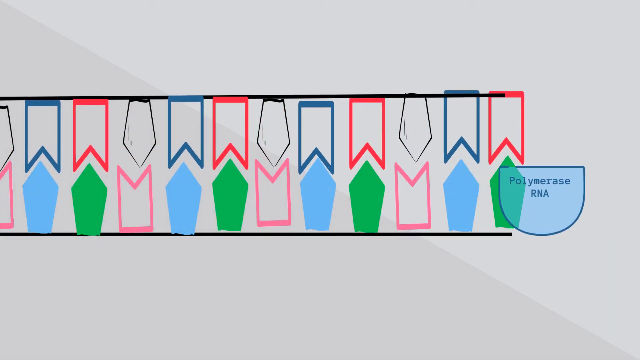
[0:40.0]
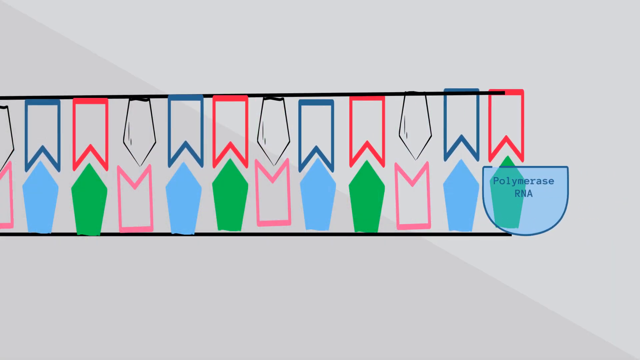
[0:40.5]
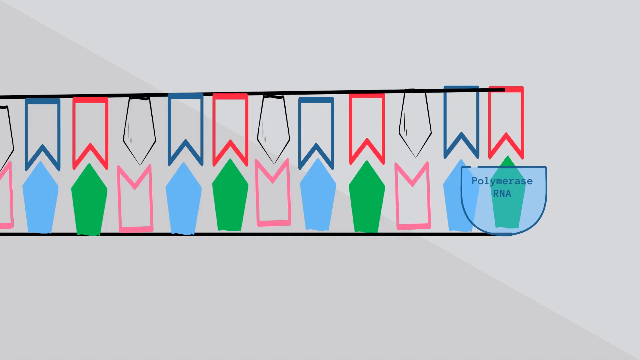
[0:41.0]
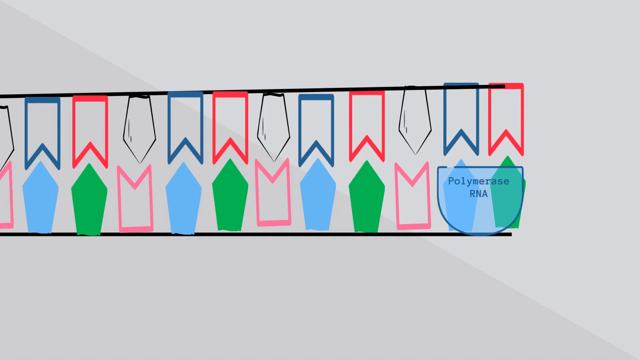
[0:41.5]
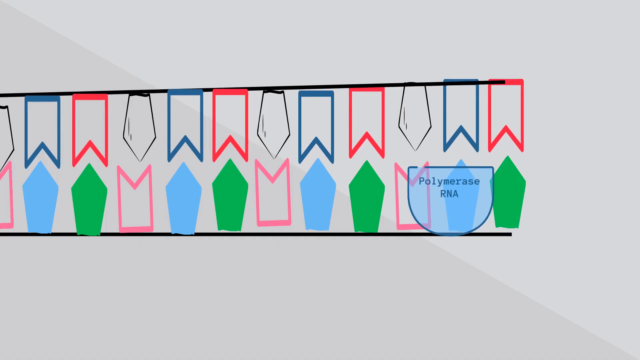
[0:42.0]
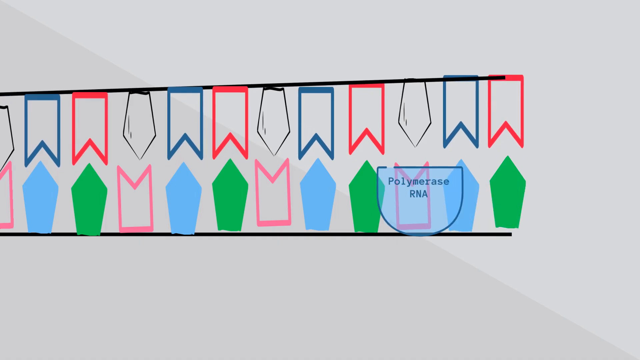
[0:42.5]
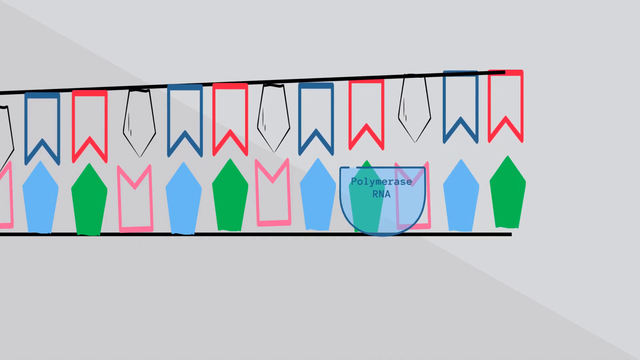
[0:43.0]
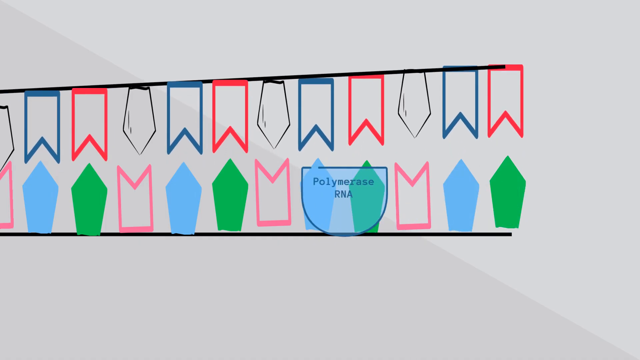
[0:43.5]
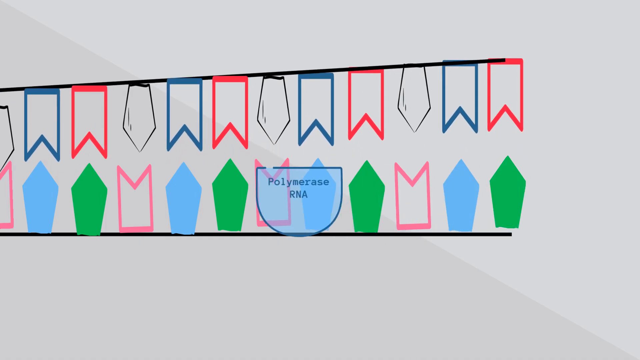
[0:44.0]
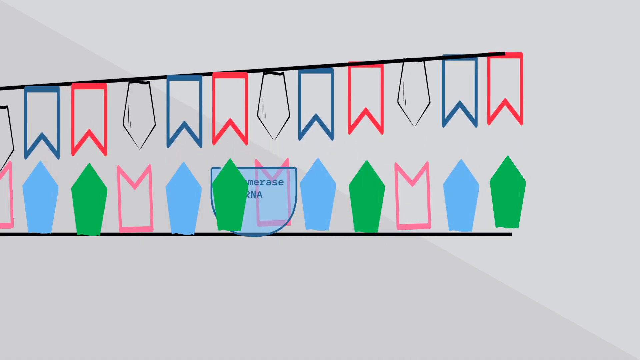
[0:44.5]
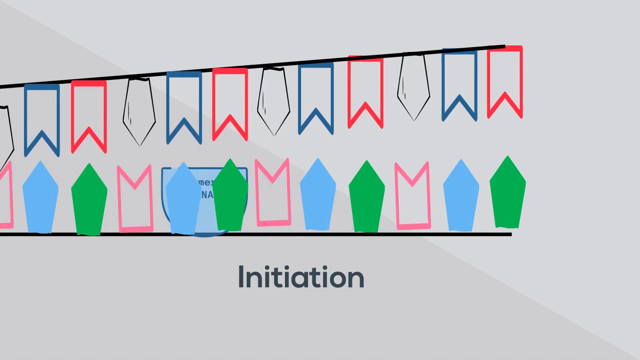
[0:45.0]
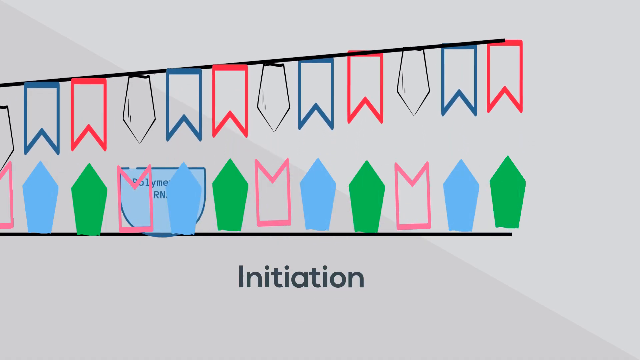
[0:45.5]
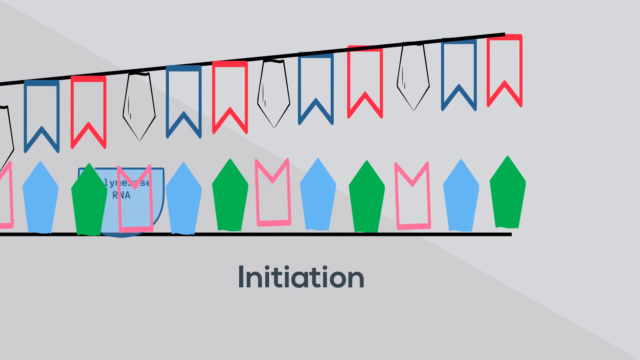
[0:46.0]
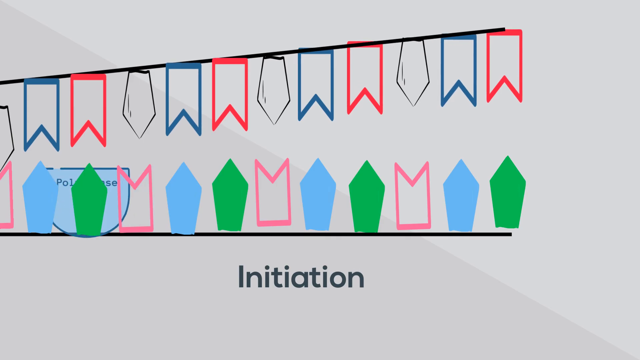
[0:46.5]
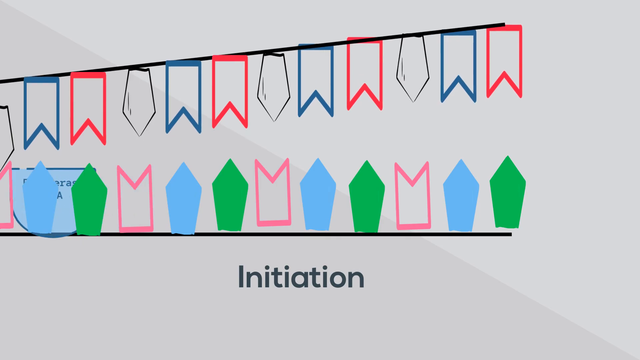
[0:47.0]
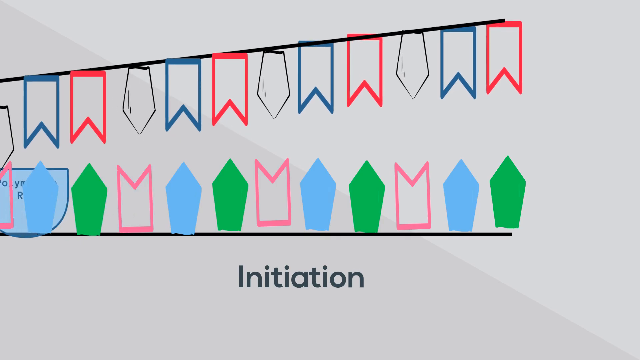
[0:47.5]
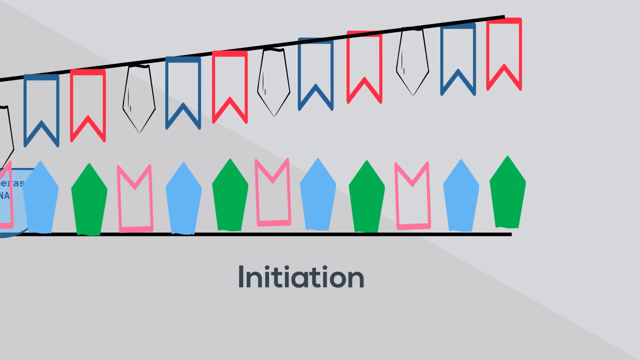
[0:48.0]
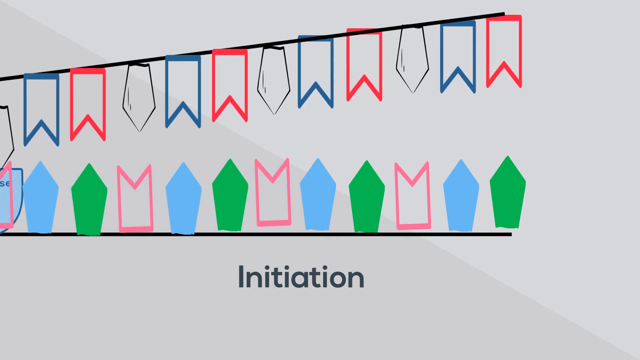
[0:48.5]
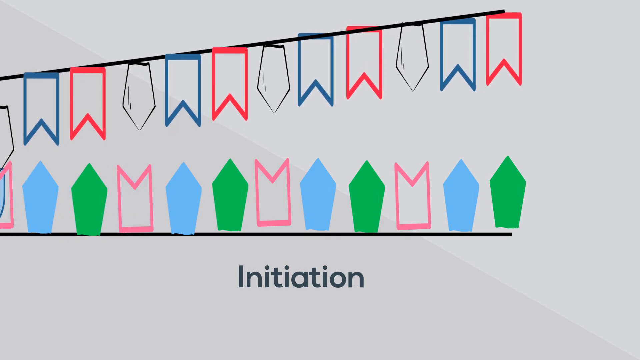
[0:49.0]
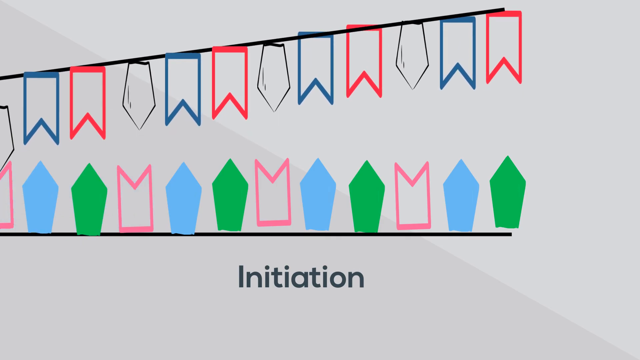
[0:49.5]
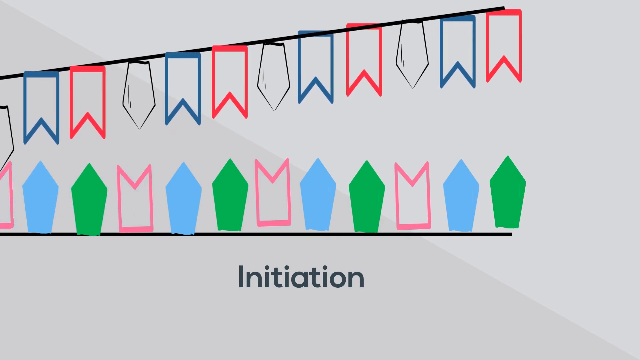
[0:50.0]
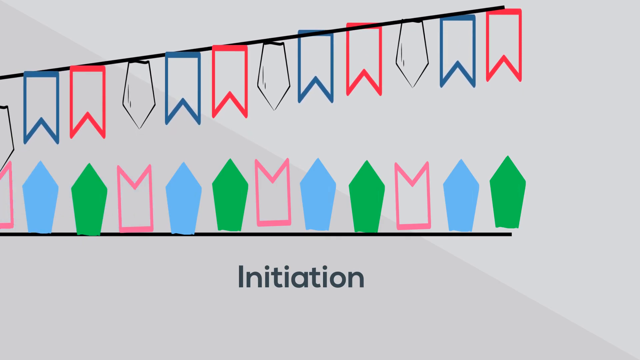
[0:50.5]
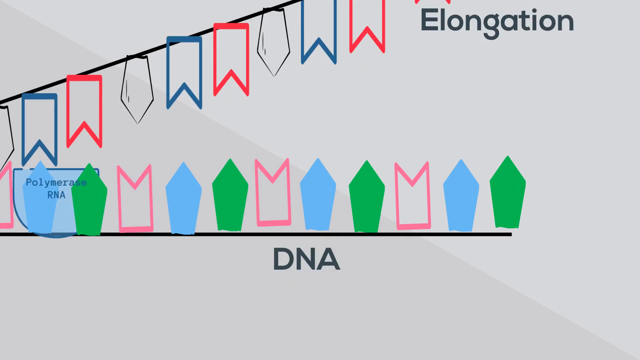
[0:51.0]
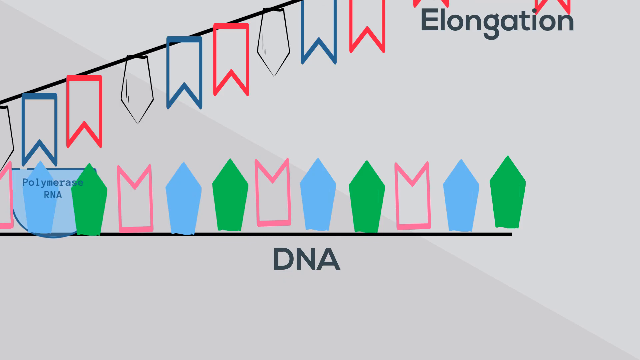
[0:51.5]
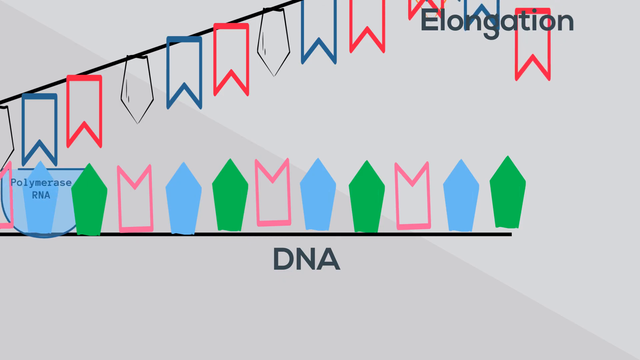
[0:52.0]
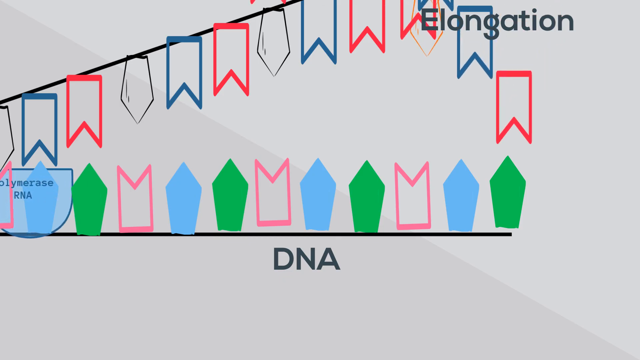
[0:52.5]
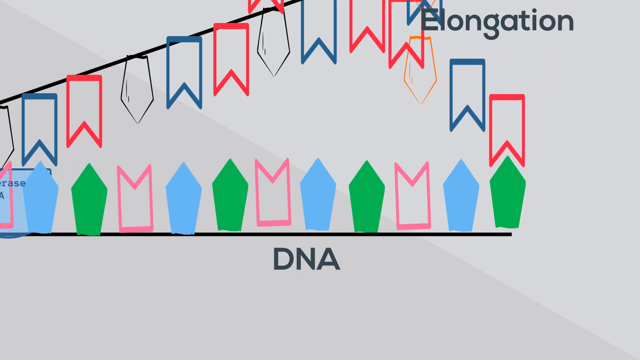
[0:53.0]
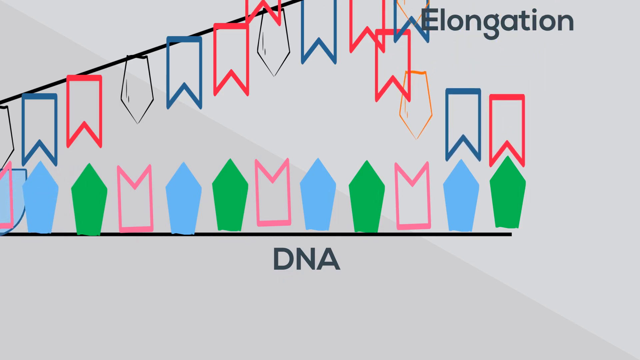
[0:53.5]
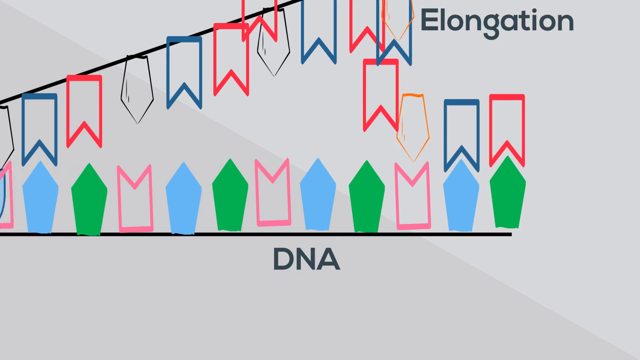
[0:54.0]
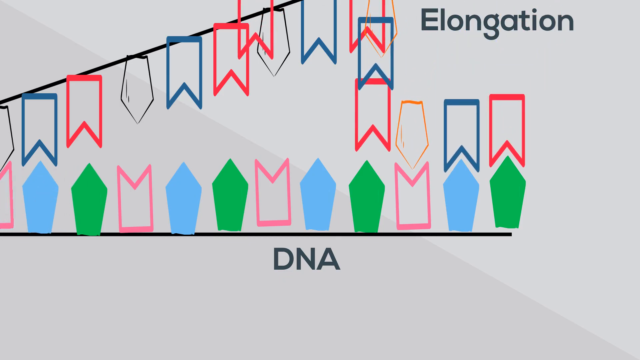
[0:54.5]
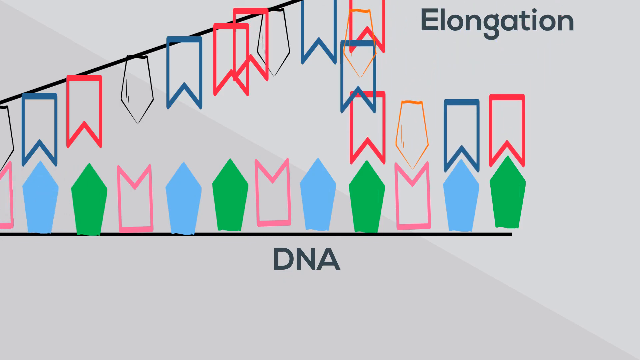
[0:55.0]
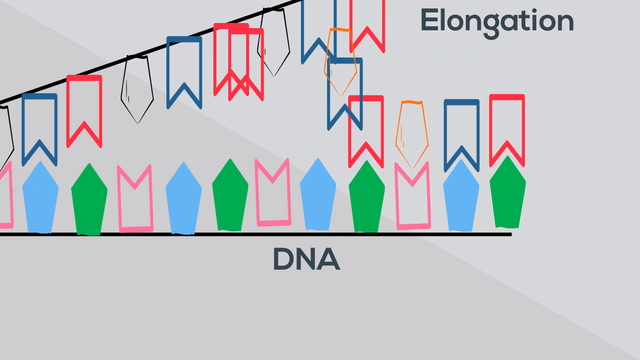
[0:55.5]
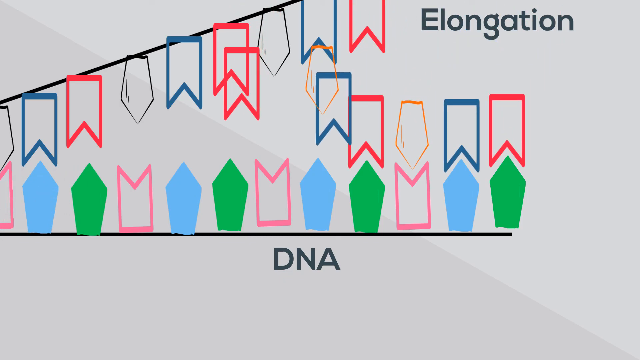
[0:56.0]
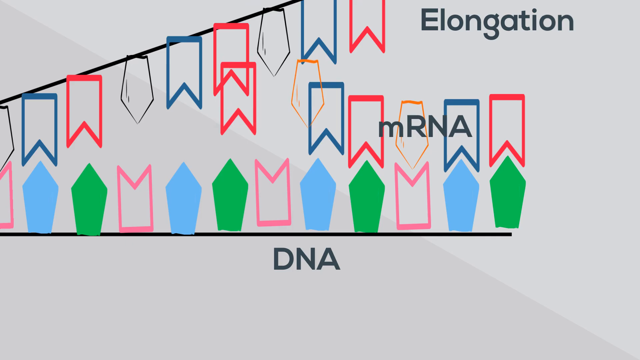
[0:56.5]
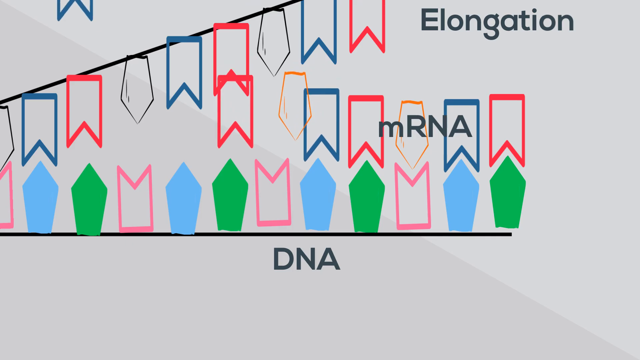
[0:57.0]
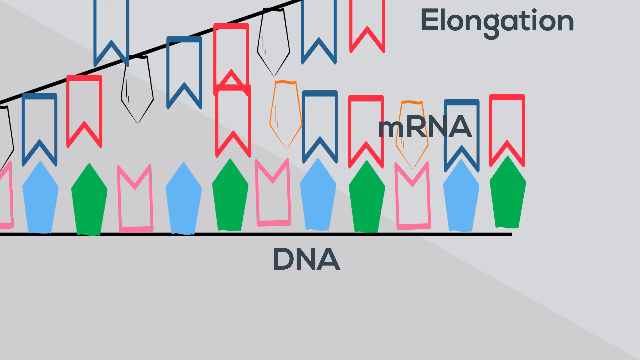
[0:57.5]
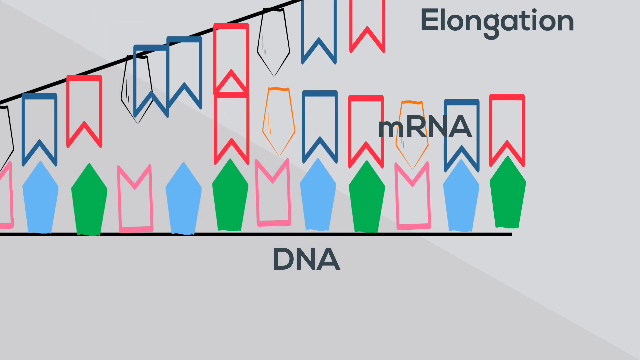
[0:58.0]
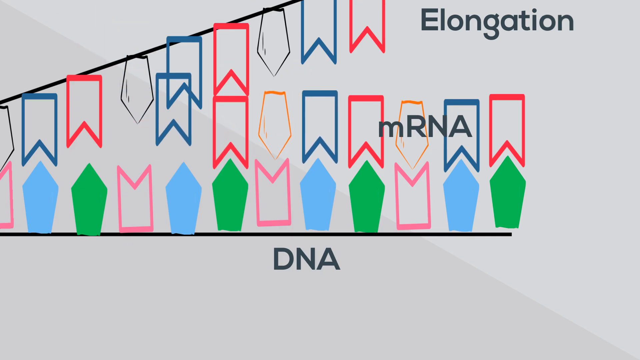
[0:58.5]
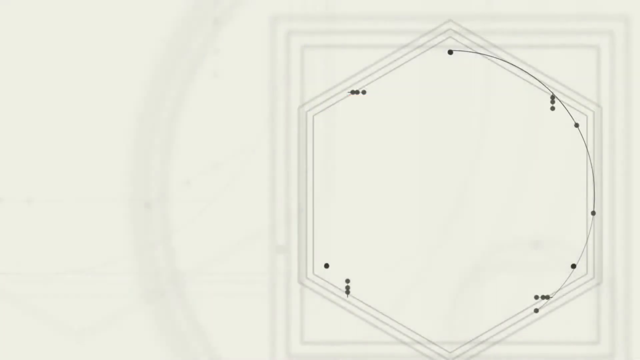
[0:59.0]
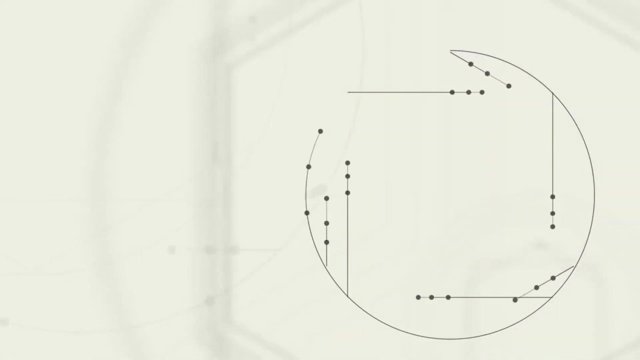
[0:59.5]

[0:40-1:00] The polymerase RNA molecule runs through the lower half of the strand, and as it does, the top half of the strand separates along with its shapes. The word "initiation" pops up at the bottom of the screen. As the polymerase RNA reaches the end, the top half of the strand keeps opening up like a zipper. The next scene shows elongation: the replicated shapes fall onto the bottom part of the strand, where all the shapes fit like a jigsaw puzzle, and these new replicated shapes are called mRNA. The video then cuts to a sphere with a geometric, hexagonal-like design inside it.